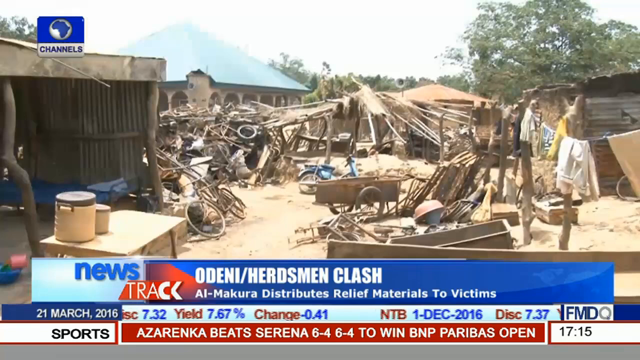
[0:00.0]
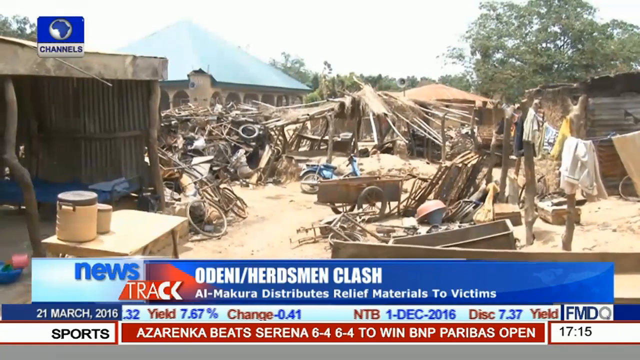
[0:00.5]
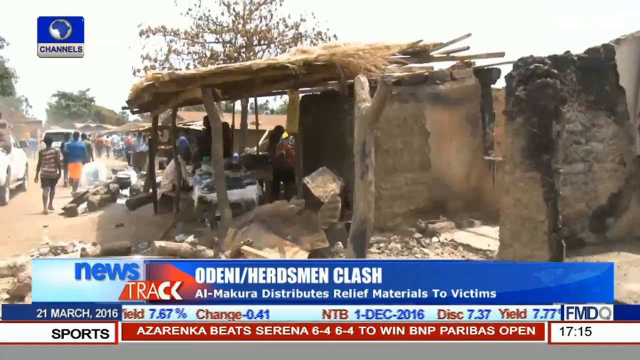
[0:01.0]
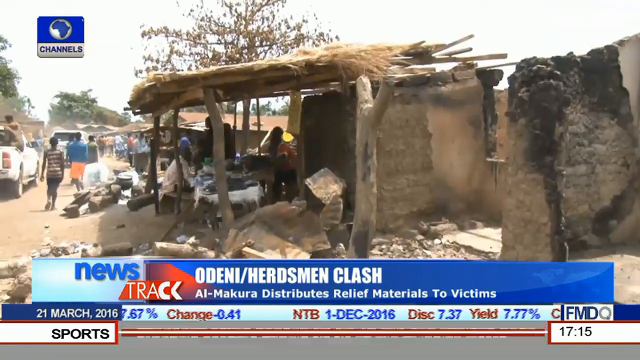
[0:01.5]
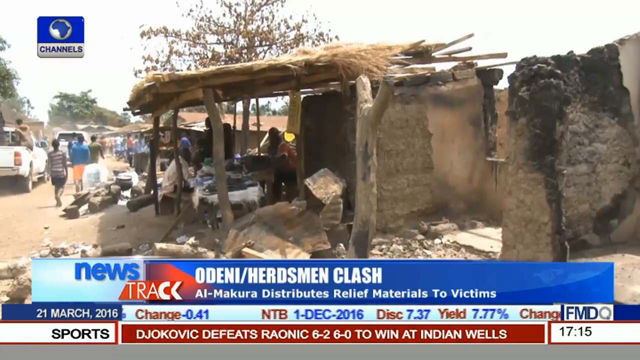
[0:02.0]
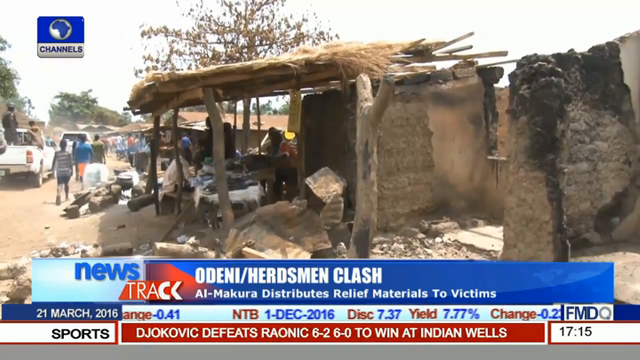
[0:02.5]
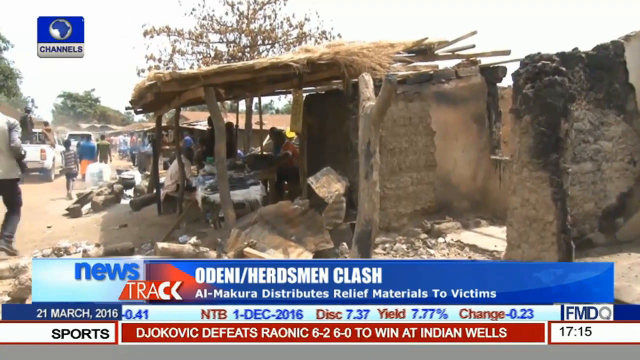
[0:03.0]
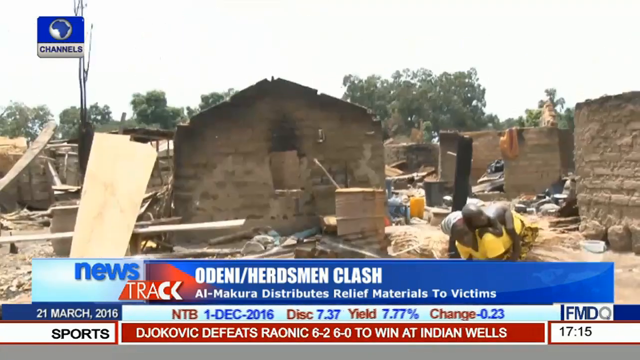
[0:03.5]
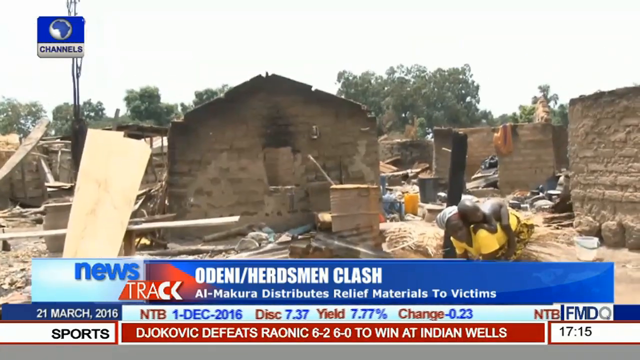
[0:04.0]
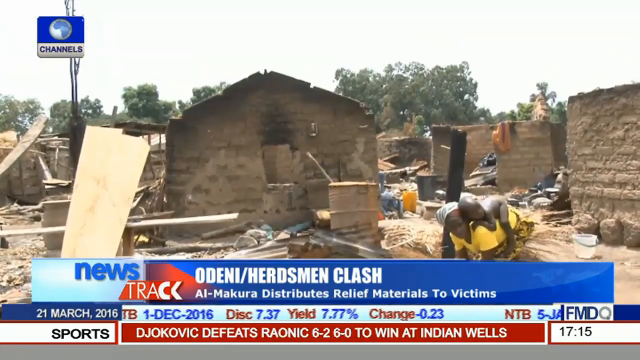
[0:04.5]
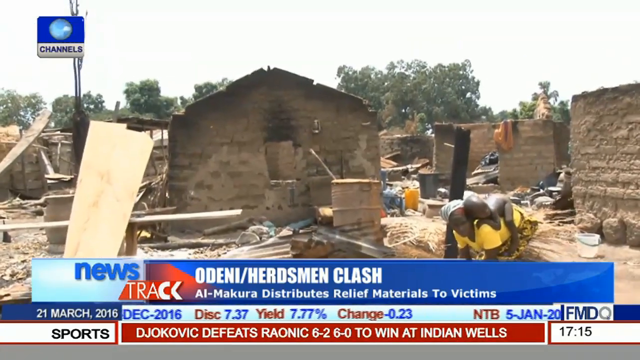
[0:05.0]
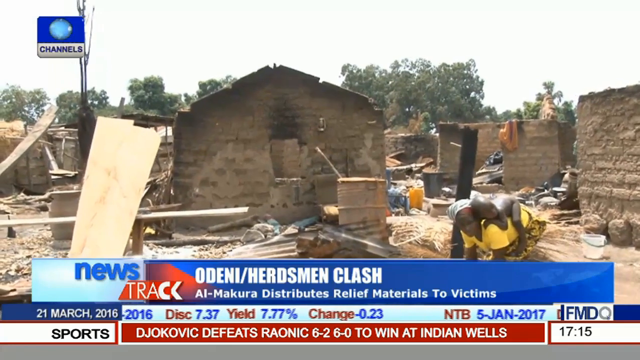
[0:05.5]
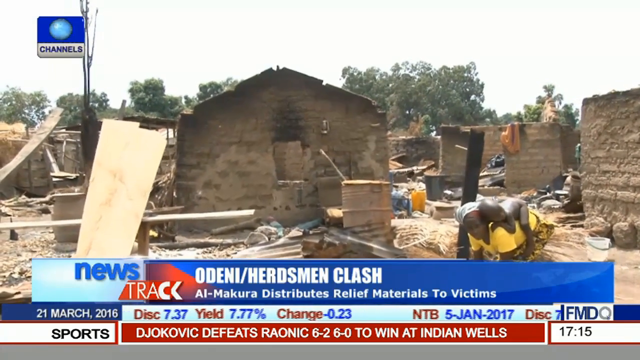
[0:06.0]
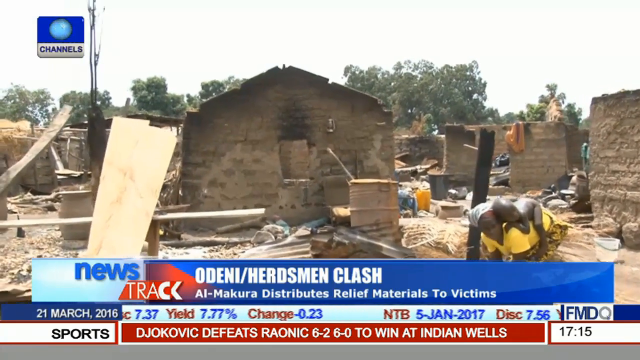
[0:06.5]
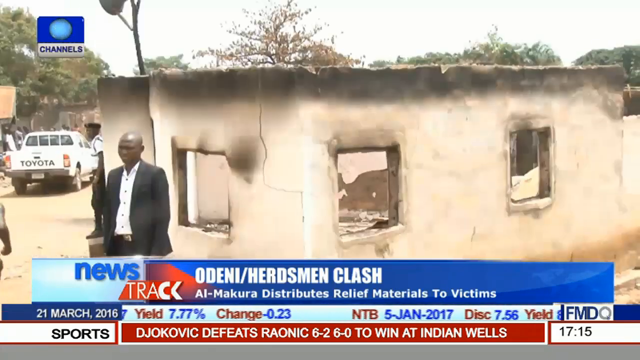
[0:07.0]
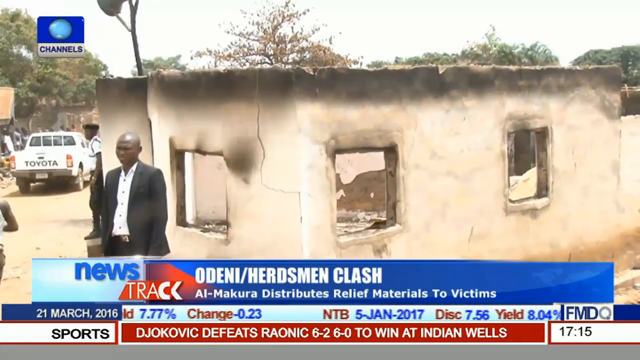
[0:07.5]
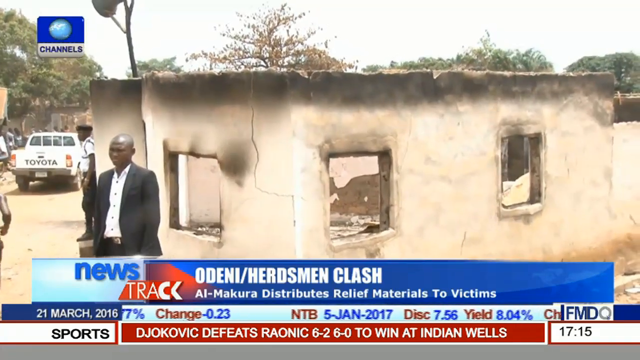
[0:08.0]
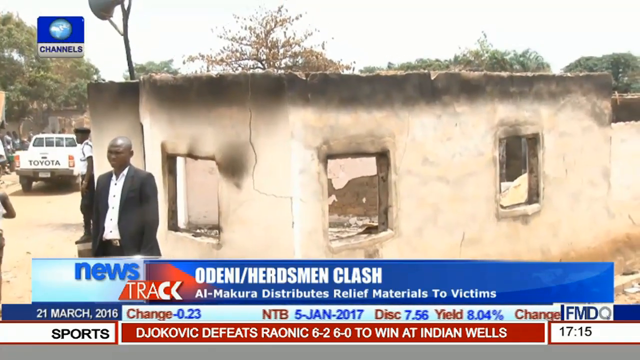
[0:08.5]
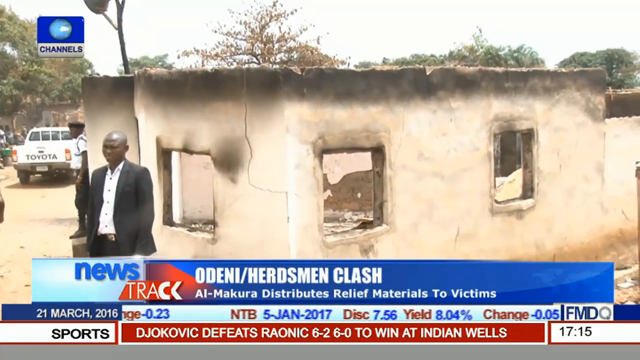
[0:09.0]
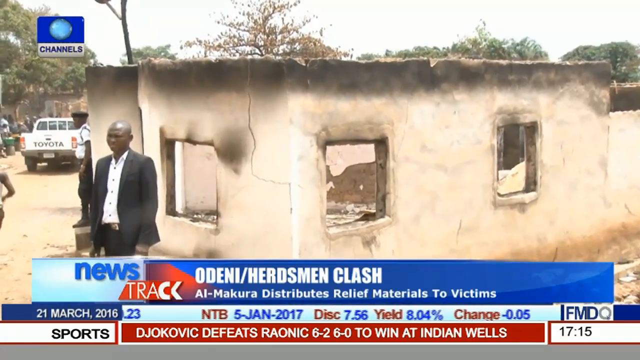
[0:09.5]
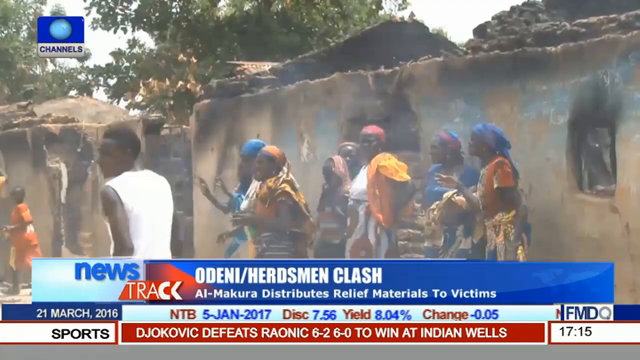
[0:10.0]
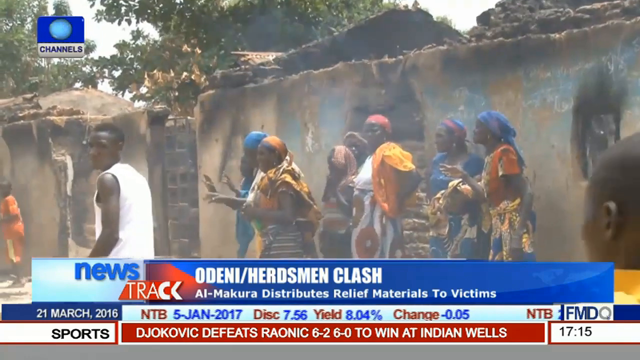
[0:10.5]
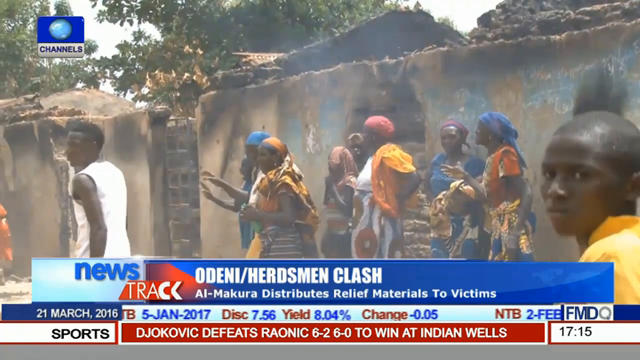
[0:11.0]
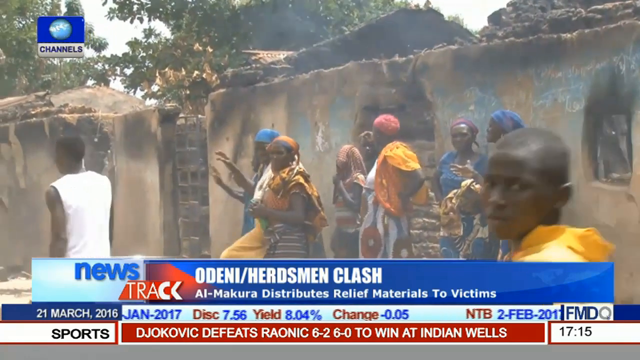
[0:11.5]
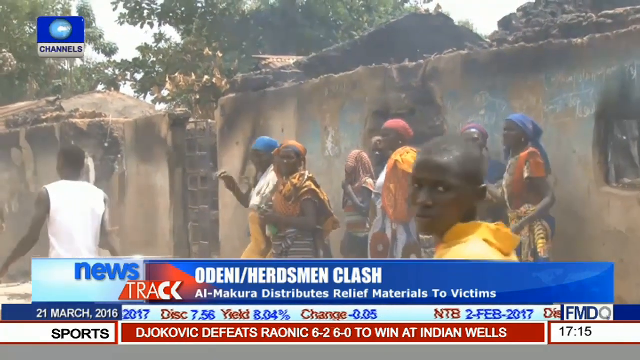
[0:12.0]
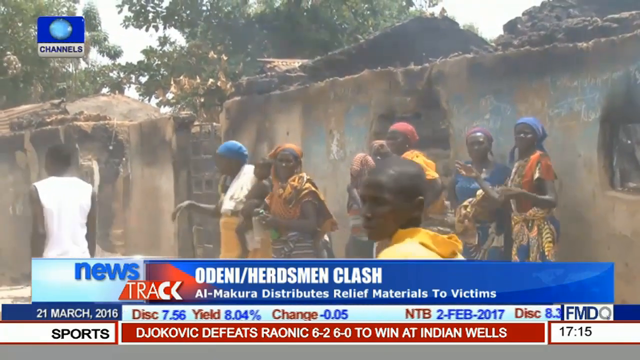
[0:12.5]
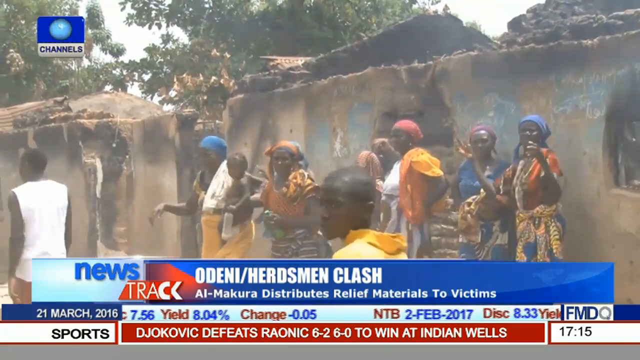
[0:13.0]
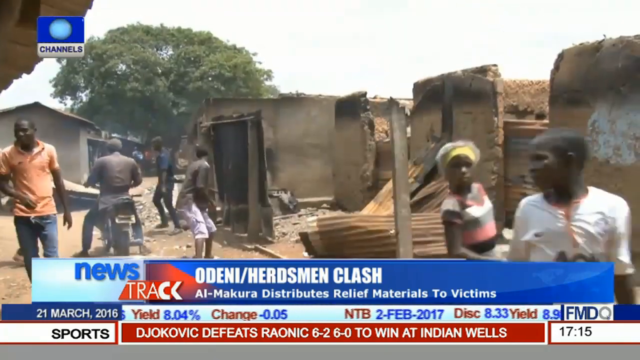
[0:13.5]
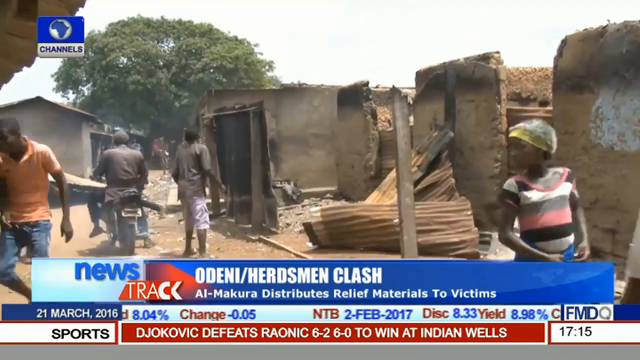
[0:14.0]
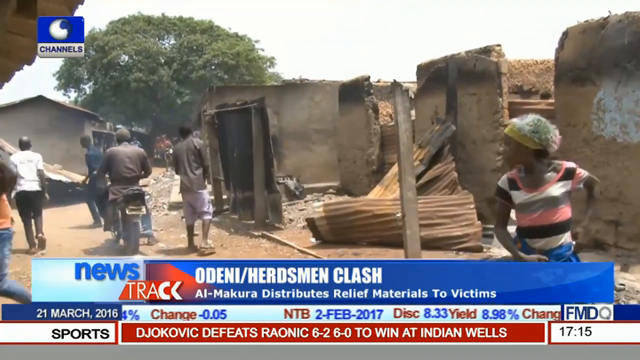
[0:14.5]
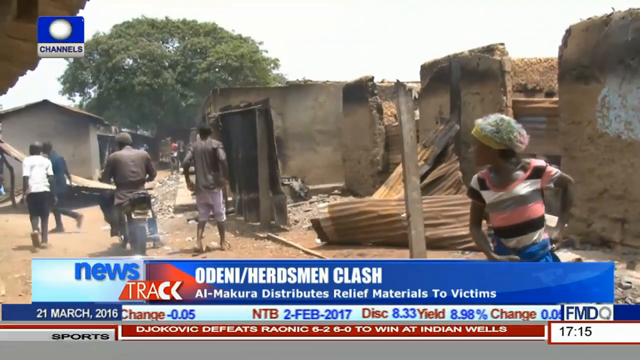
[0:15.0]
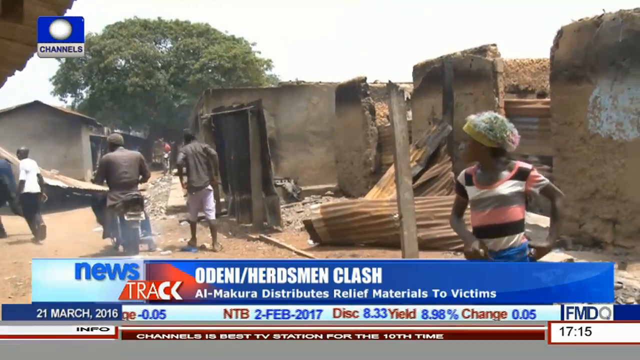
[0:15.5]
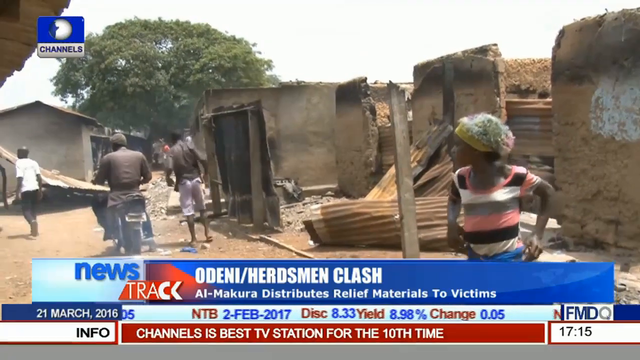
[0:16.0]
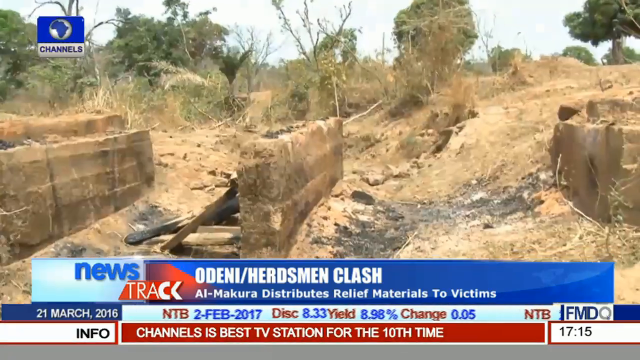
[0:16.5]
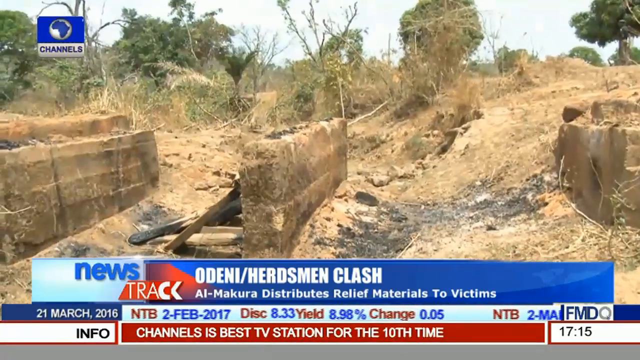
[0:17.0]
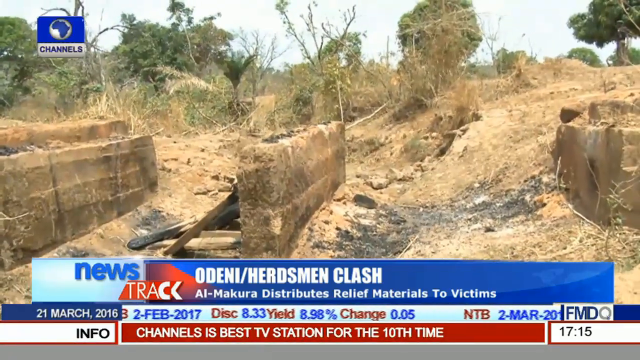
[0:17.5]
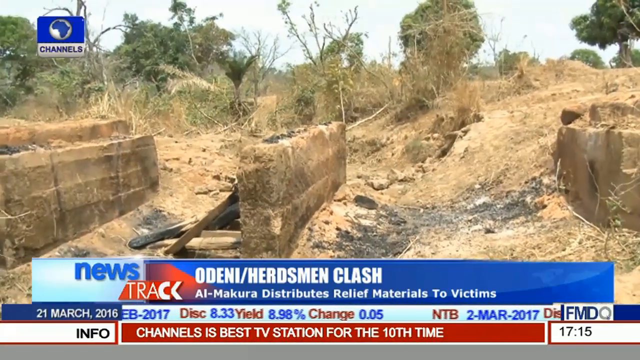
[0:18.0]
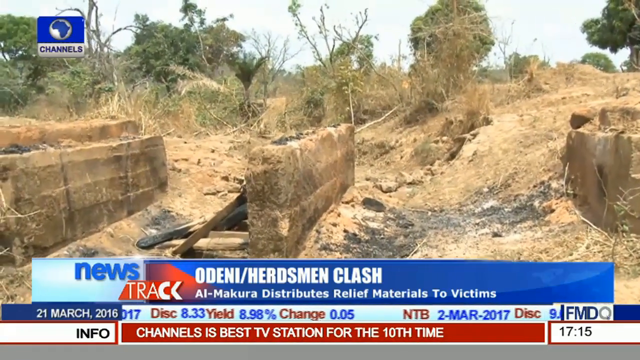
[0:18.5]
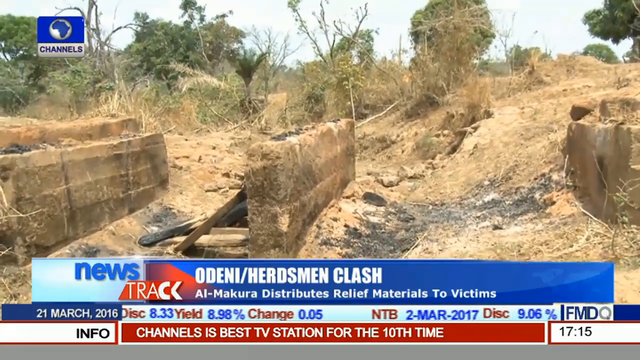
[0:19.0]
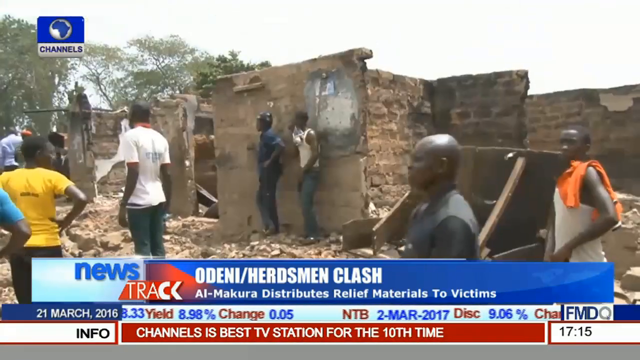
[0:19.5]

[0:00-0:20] A news program is on screen, apparently about a clash and about distributing relief materials to victims. What looks like a village appears, with children walking next to a white truck. Then there is what looks like damage, and a child on its mother's back. A man wears a white button-up shirt with a black jacket, and what looks like police are just behind him as a truck drives down the street. A group of people follows, including women with various colored fabric on their heads, and what looks like smoke is possibly emerging from a burnt building. More people walk by, along with a man on a motorcycle. Then what looks like the base of a former building appears; there could be ashes on the ground, there is a black part, and some people were leaning against this building.